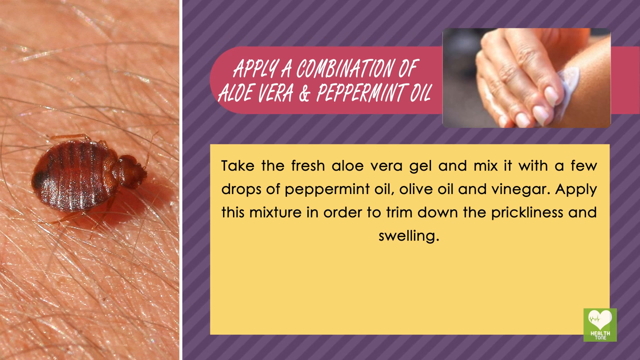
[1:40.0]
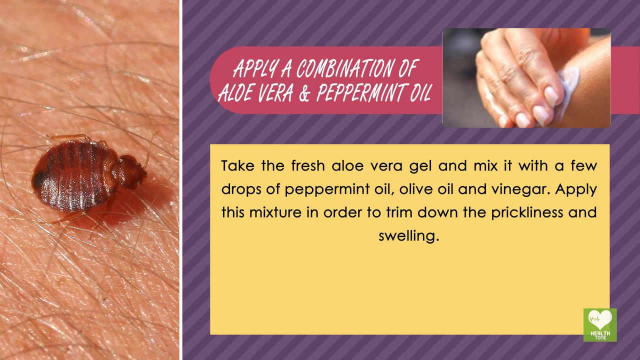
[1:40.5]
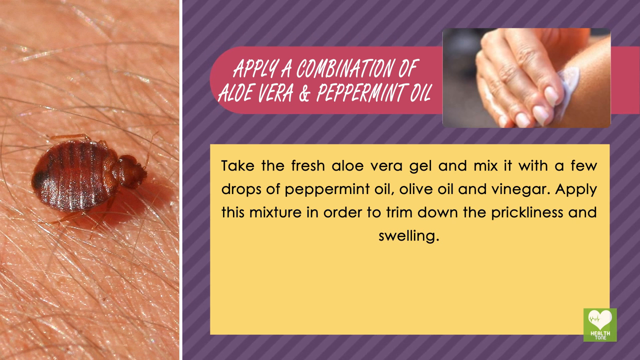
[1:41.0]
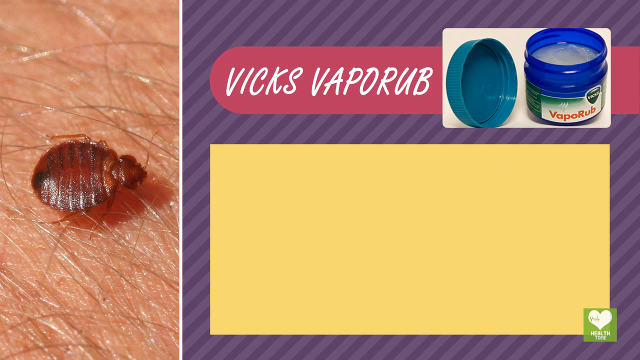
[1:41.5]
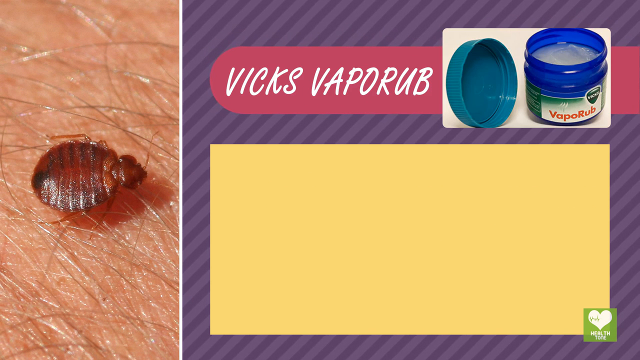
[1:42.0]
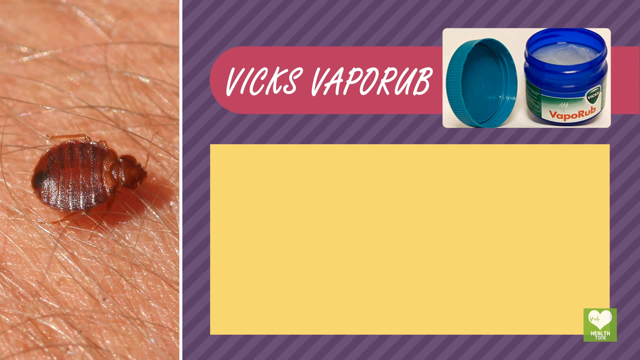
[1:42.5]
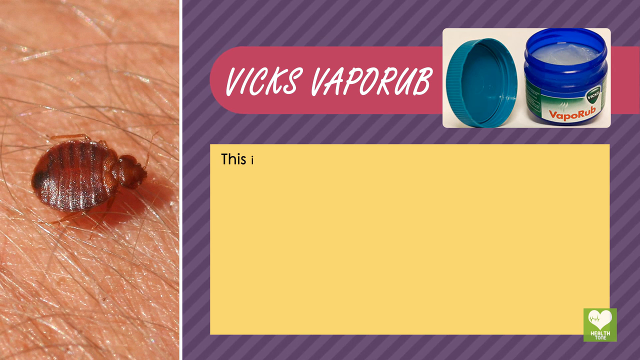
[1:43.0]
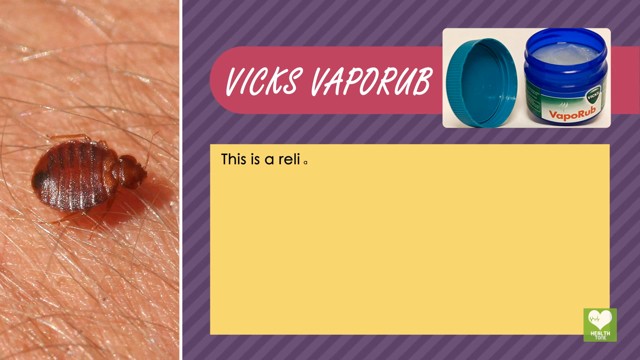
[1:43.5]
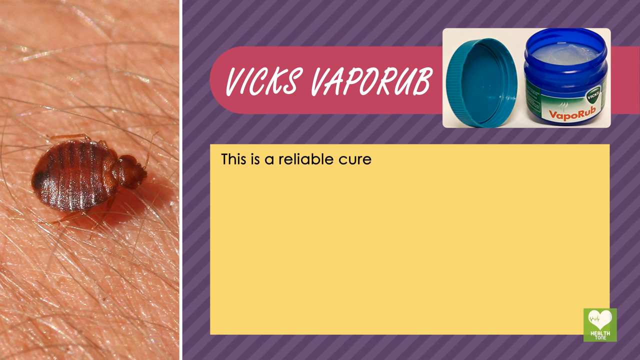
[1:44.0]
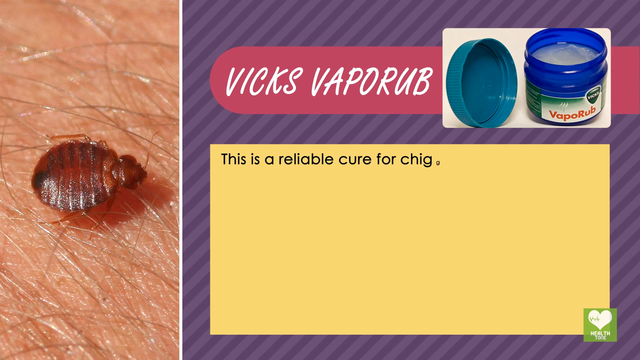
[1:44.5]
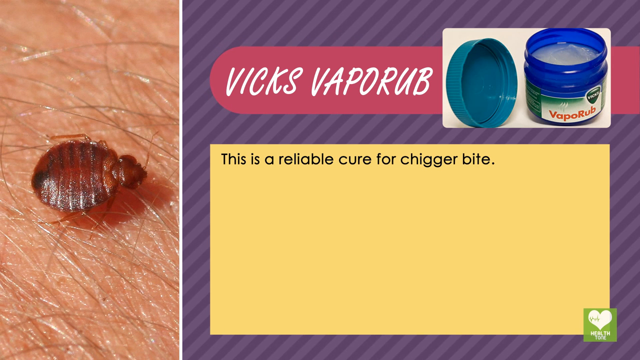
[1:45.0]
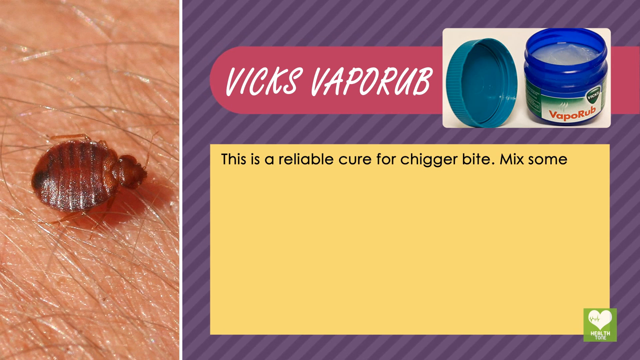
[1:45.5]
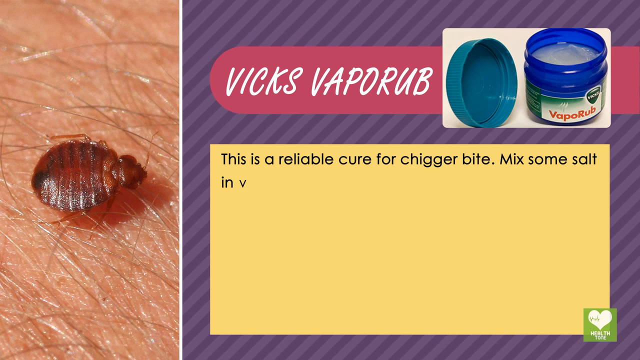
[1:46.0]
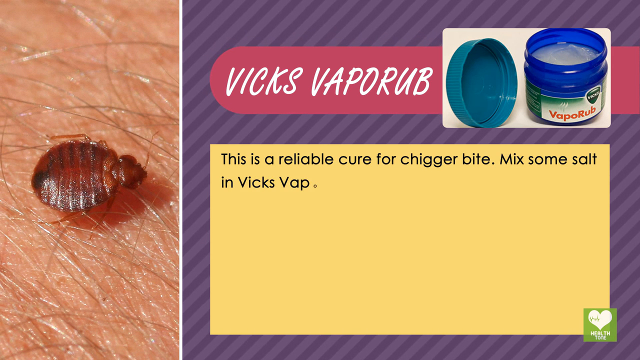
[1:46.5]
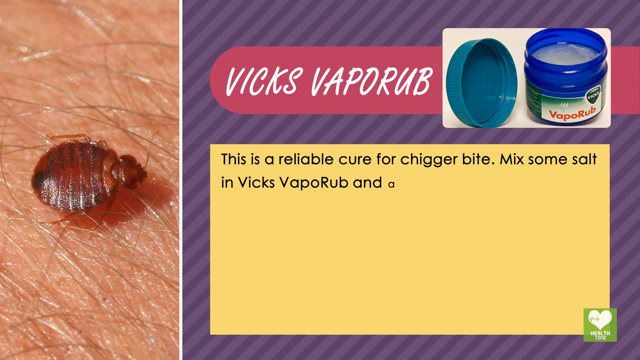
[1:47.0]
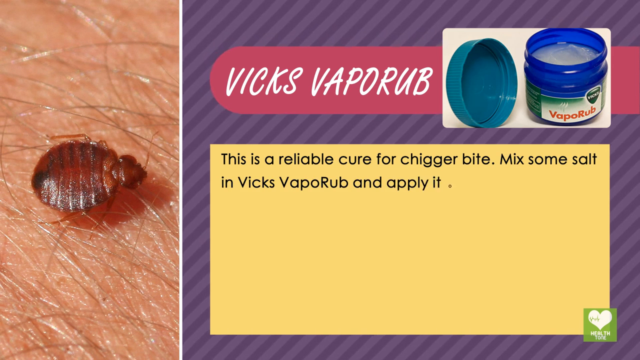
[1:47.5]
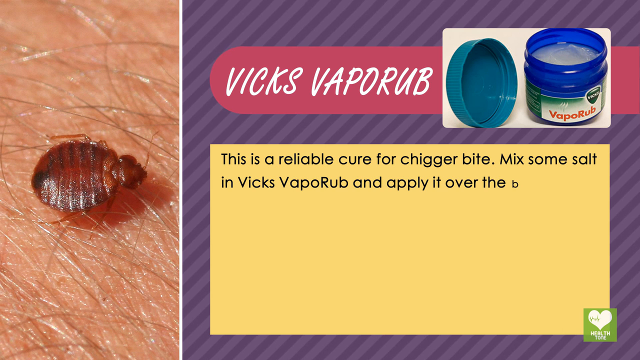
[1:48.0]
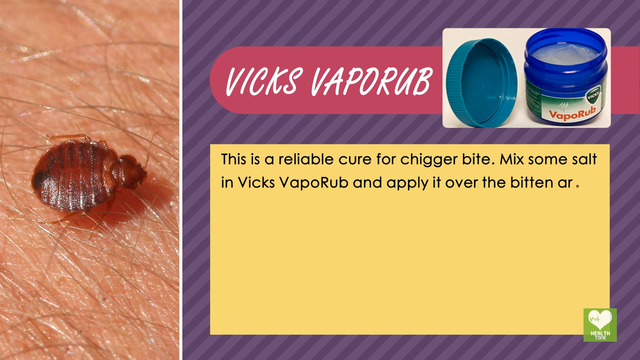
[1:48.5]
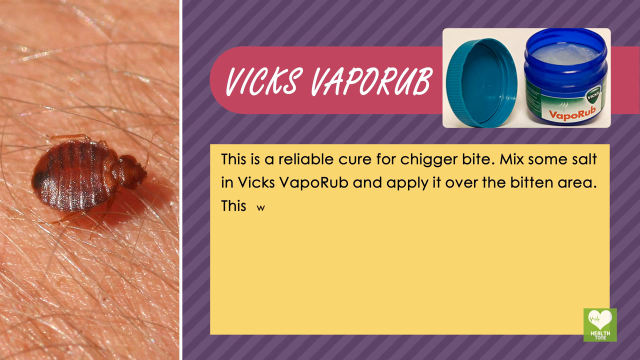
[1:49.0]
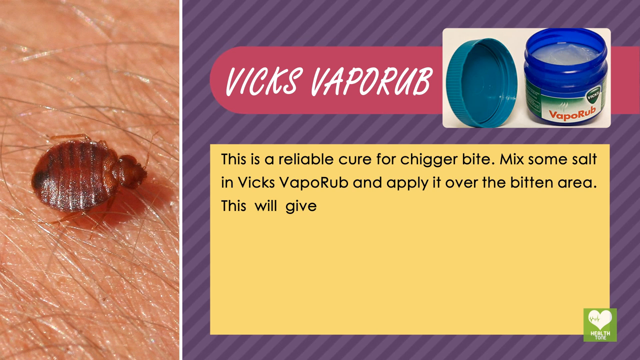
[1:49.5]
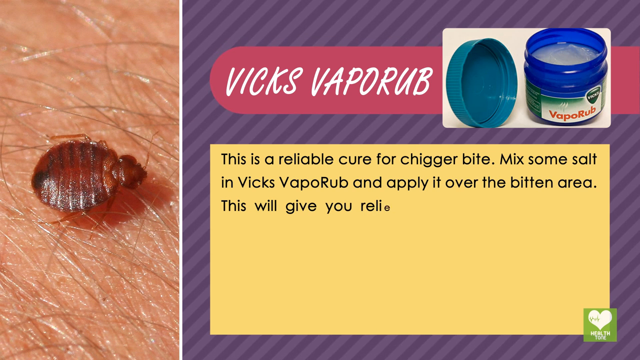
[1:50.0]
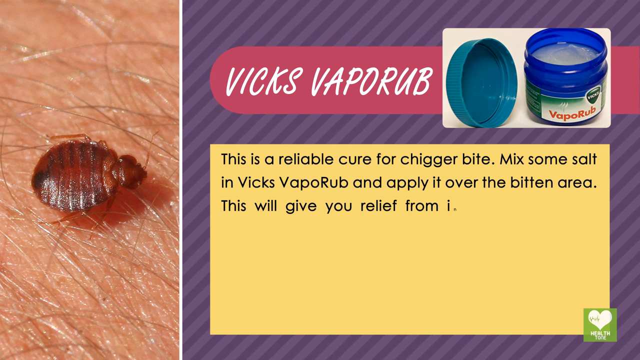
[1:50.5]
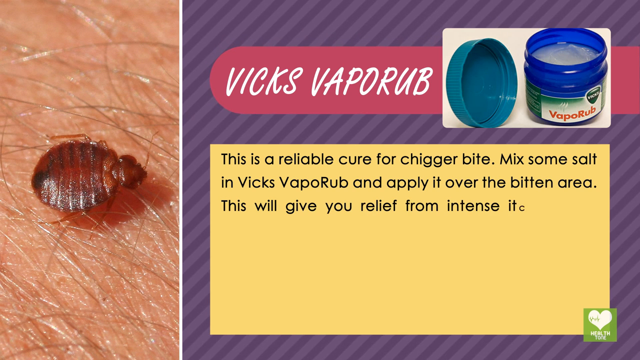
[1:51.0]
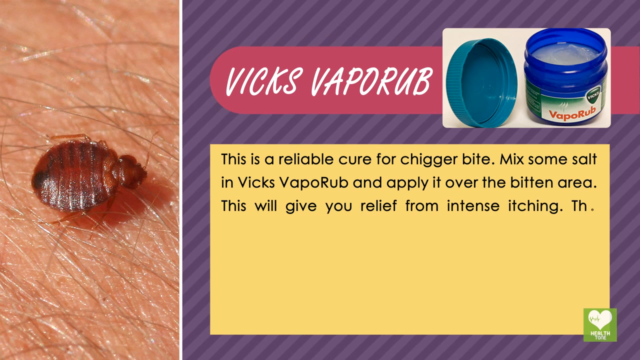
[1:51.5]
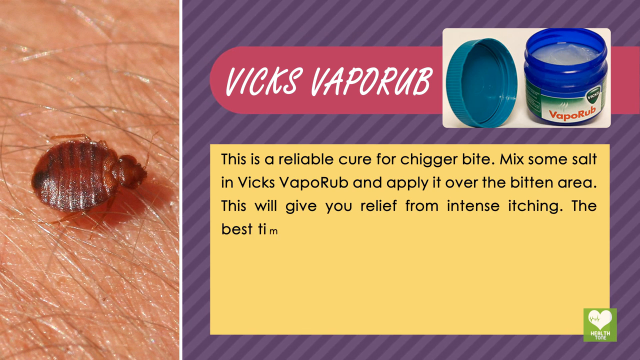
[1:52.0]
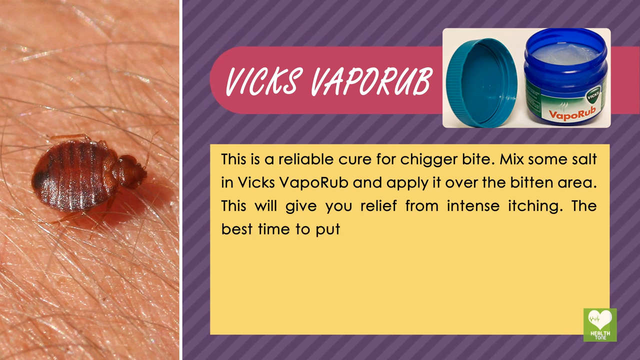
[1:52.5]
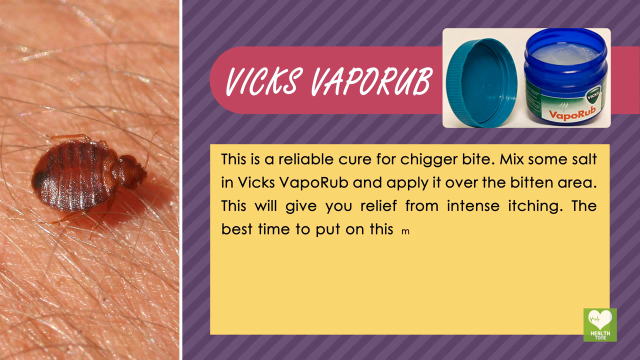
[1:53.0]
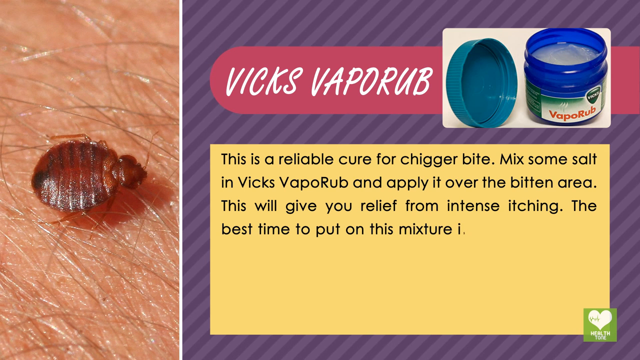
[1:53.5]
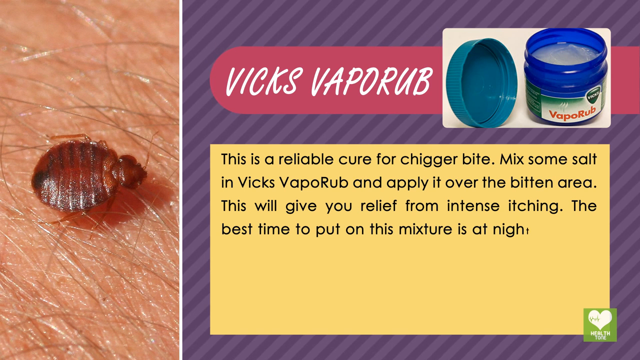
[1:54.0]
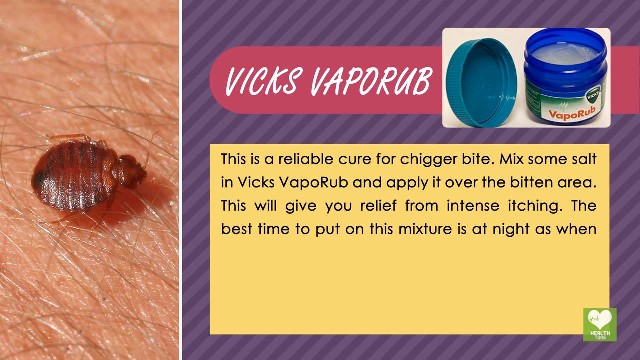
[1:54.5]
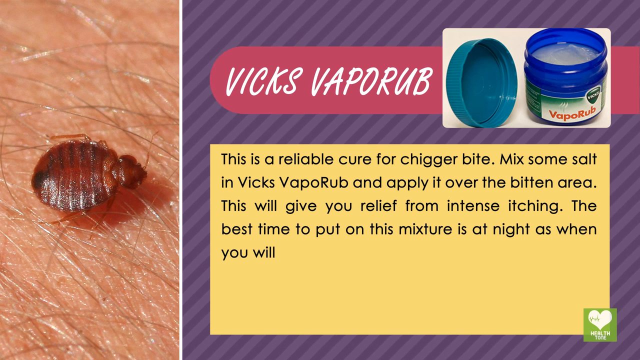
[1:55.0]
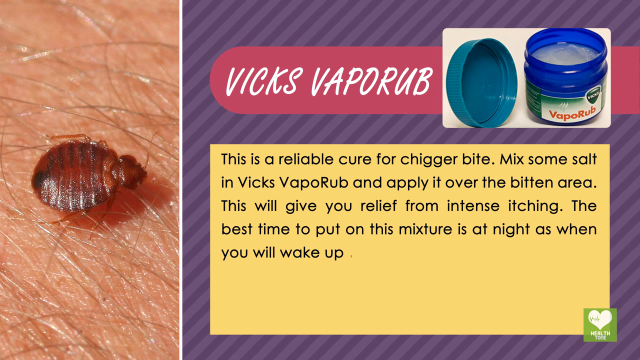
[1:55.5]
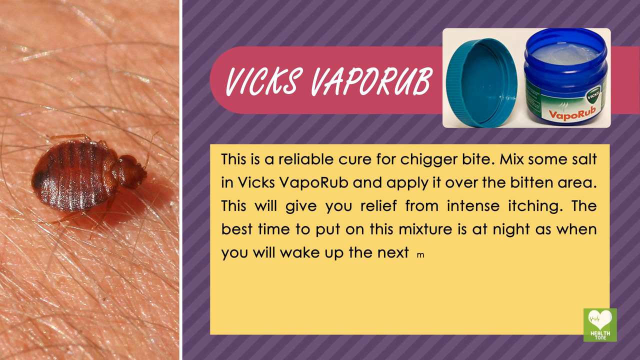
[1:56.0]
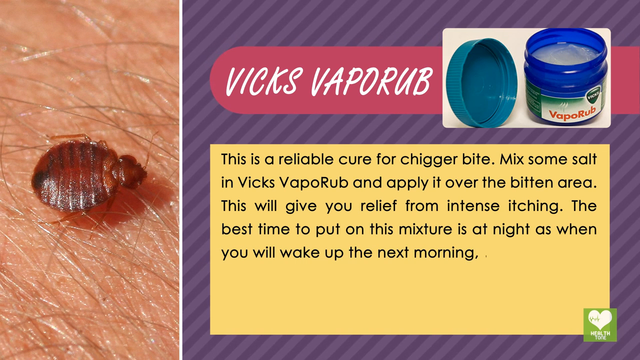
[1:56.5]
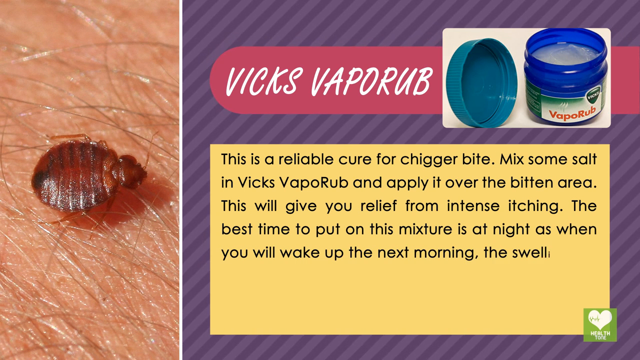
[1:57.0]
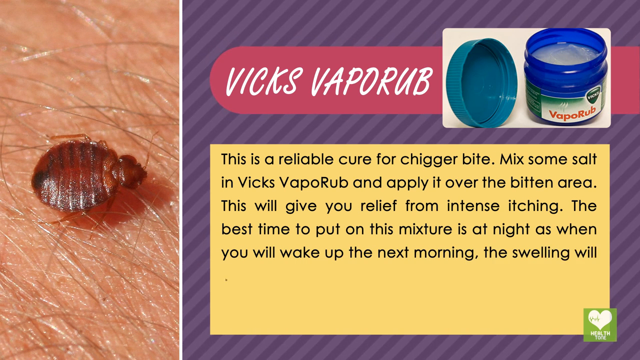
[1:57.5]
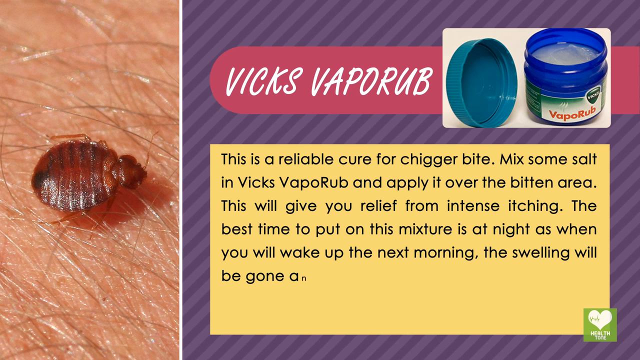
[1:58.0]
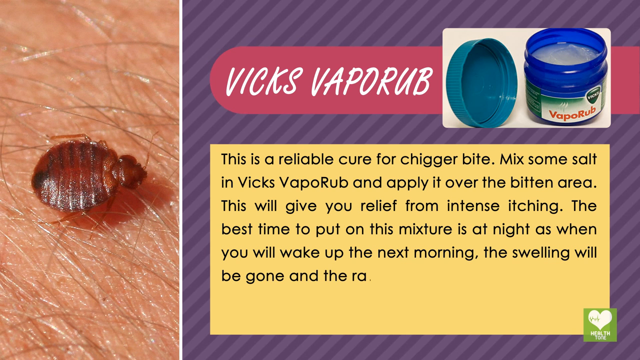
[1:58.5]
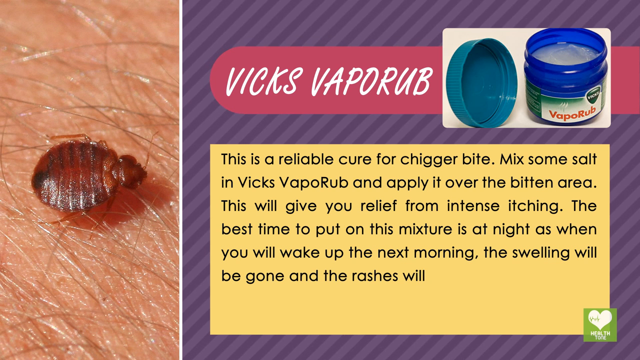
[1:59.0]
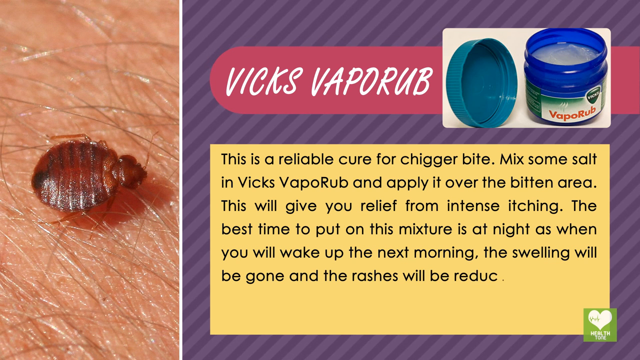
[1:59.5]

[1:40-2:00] A jar of Vicks VapoRub appears in the image directly to the right of the headline. The jar is blue, and the white VapoRub substance is visible inside. "VapoRub" is written across the jar in orange, the Vicks logo in green is right above the B in "rub," and there is a green design and what looks like instructions that wrap around to the back of the jar. The jar's teal lid is sitting upright next to it, showing the bottom of the lid where it would screw onto the jar. The text in the yellow box reads: "this is a reliable cure for chigger bite. Mix some salt in Vicks VapoRub and apply it over the bitten area. This will give you relief from intense itching. The best time to put it on this mixture is at night, as when you wake up in the morning, the swelling will be gone and rashes will be reduced to a great extent. For more information, visit www.FEMA.gov"